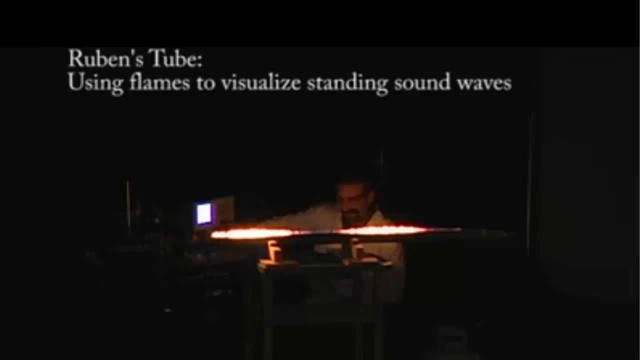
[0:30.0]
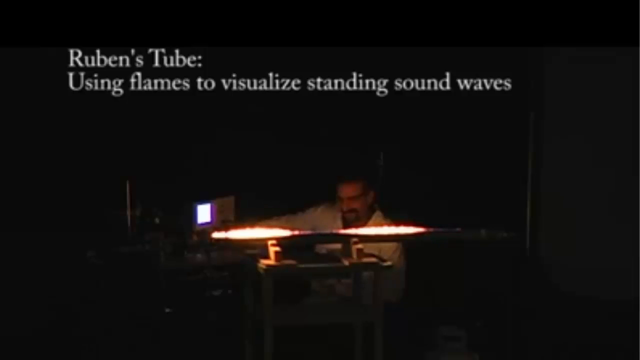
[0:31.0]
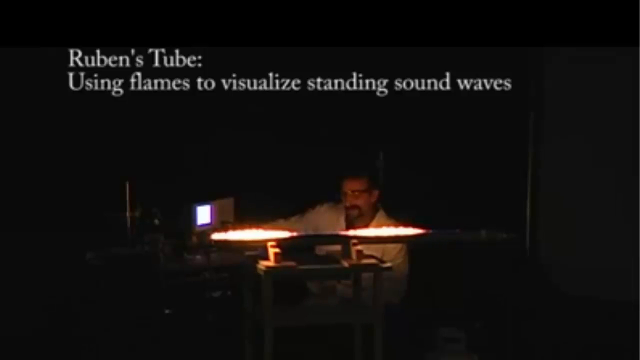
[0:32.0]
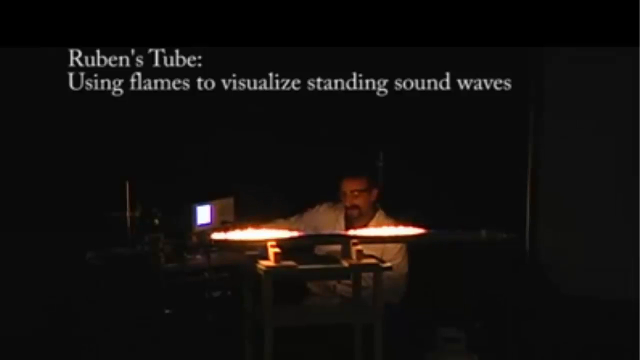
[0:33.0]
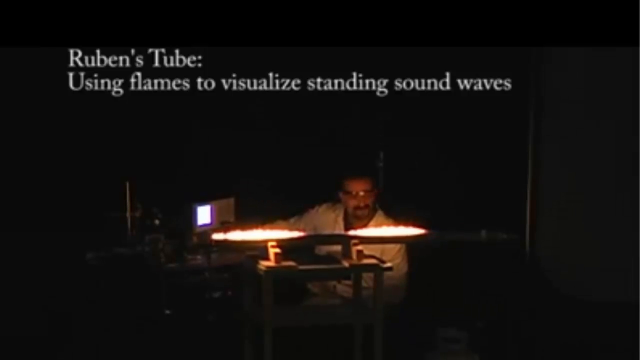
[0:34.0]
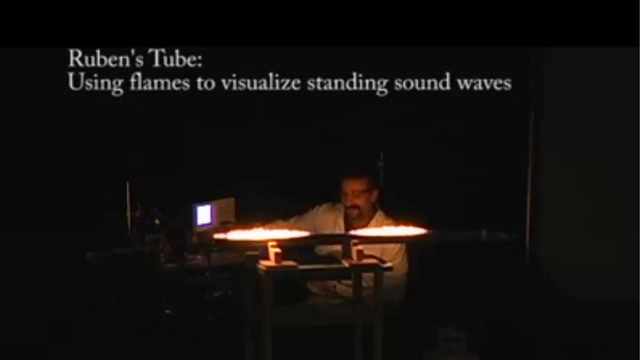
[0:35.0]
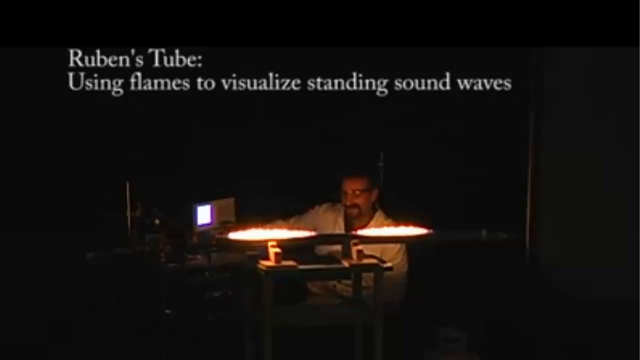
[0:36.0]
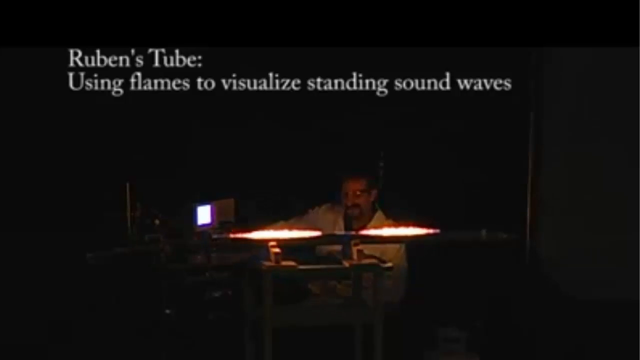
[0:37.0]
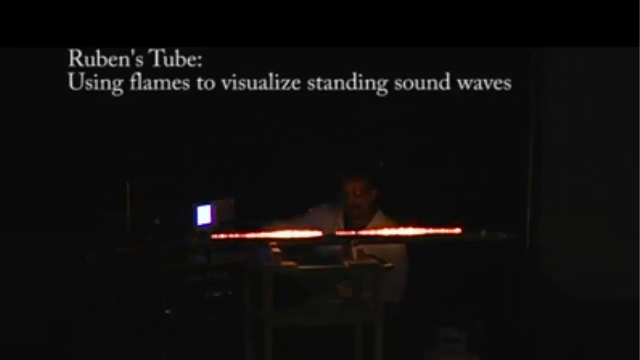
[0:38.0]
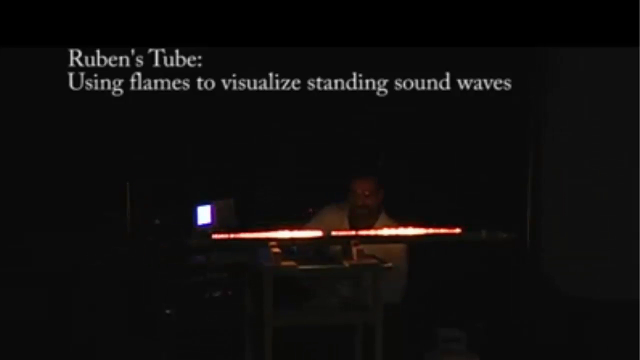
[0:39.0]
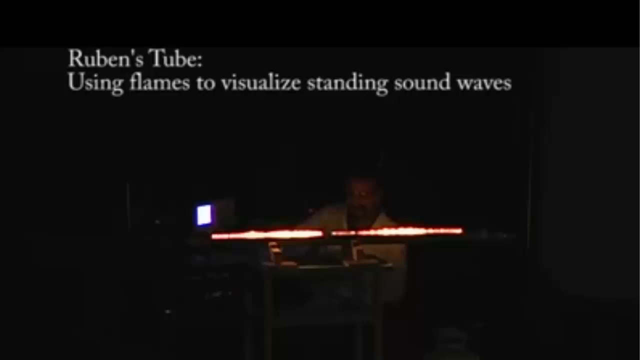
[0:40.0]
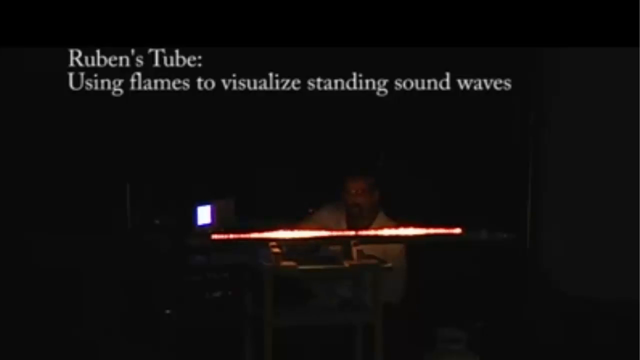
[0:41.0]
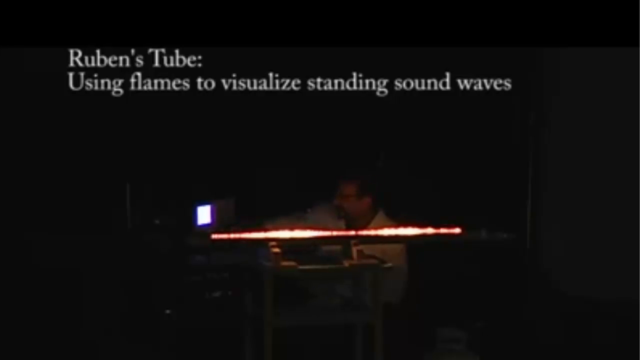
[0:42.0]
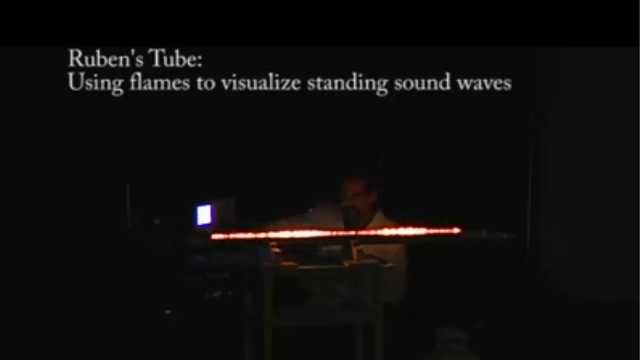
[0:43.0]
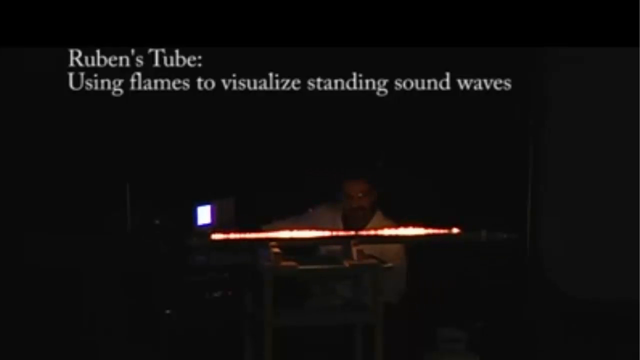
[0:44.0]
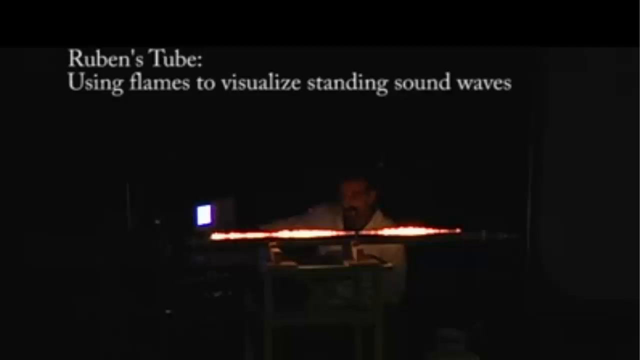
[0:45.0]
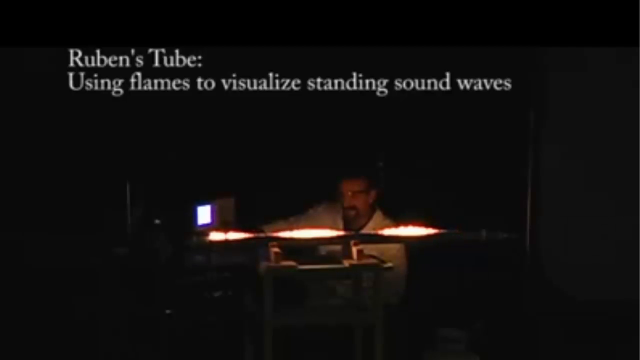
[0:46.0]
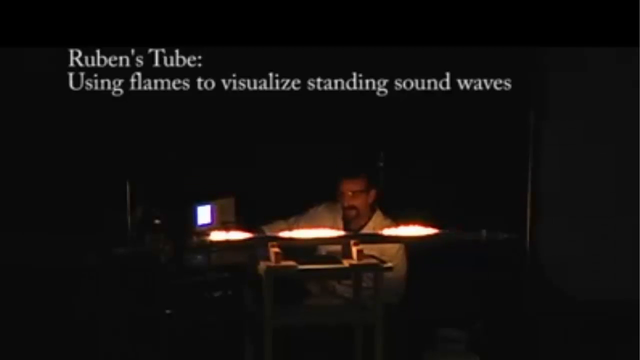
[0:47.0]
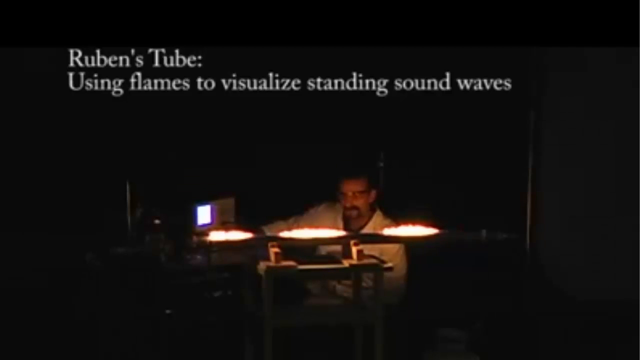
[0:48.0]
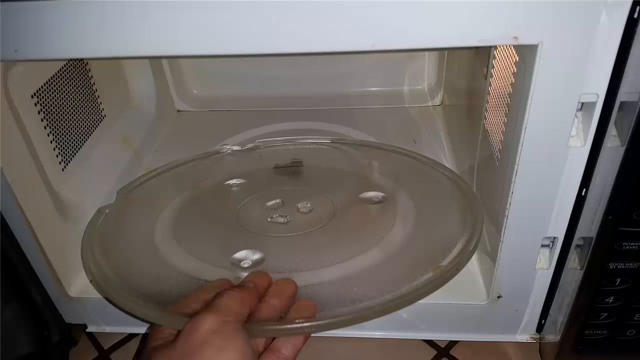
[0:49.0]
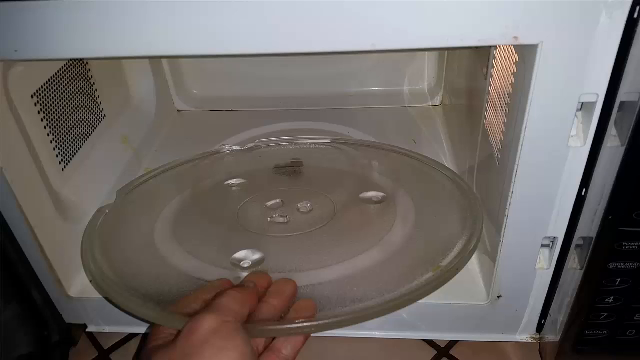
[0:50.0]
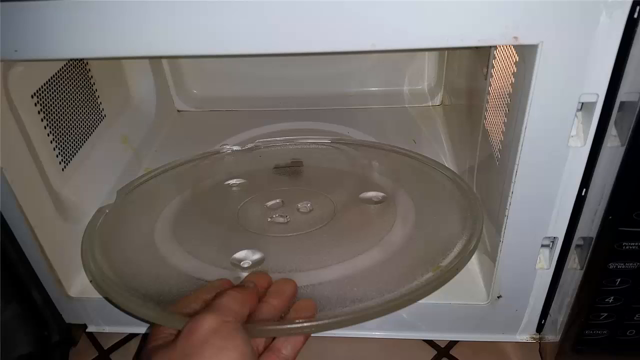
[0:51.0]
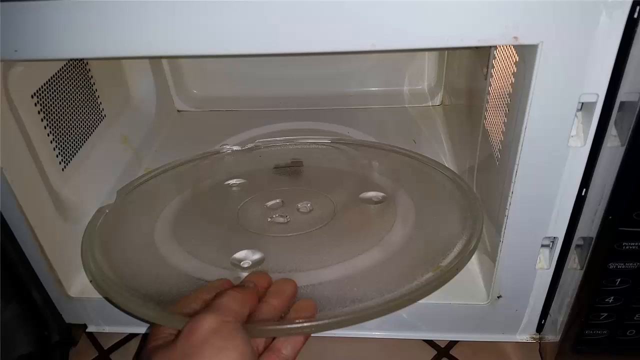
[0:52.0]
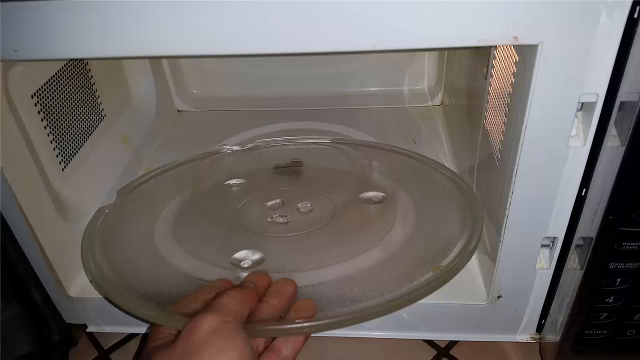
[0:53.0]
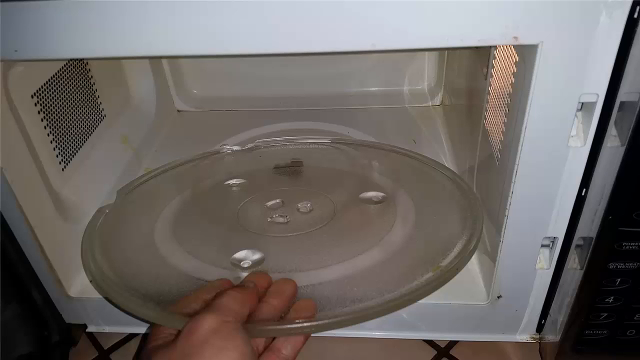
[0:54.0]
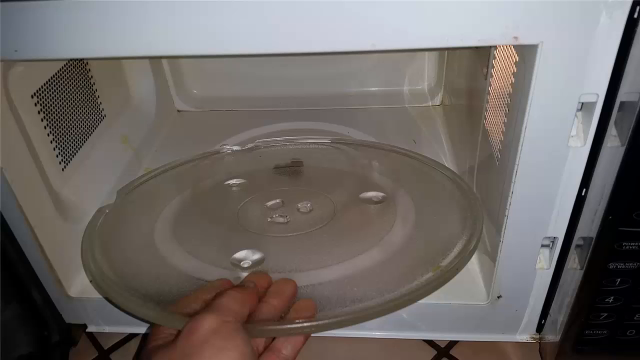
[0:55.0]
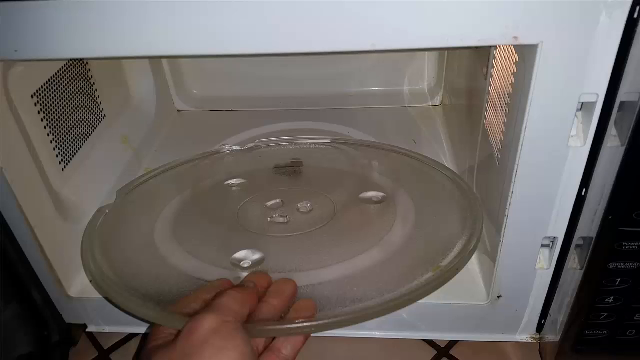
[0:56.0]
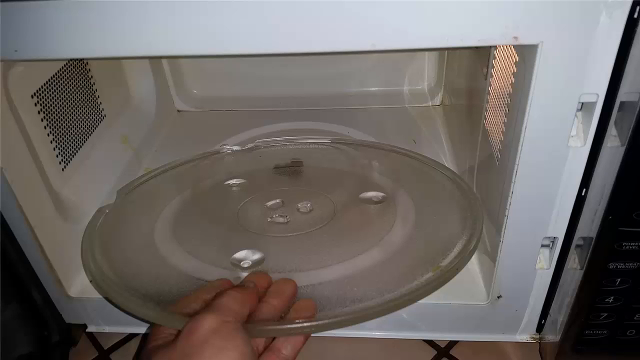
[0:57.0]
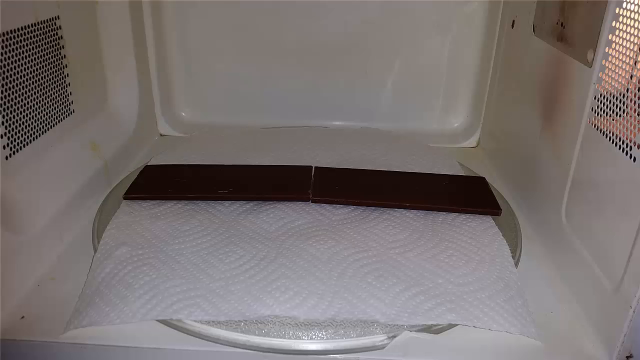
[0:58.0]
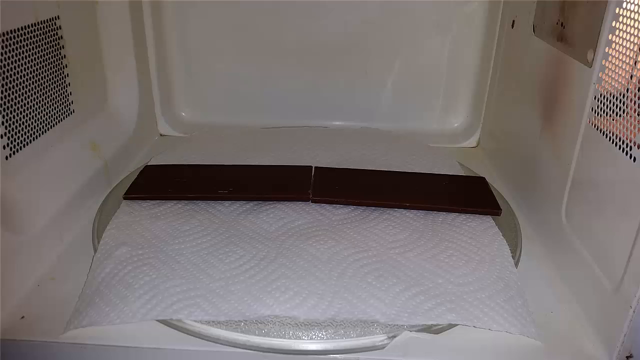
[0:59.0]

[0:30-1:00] A man is shown with what looks like a bar with horizontal flames coming out of it; something is holding the bar. He wears a white lab coat and protective eyeglasses. On the screen it says "Ruben's Tube, using flames to visualize standing sound waves." The flames are very small but form a long linear line, moving just a little as flames do. Then there are three separate flames. Next, the inside of a microwave is shown, and it looks like somebody is grabbing the glass turning plate out of it; the person's hand is visible grabbing the plate. A still image follows of the microwave without the spinning plate, with a white paper towel laid down inside and something on top of it that cannot be identified, looking almost like a long piece of metal.